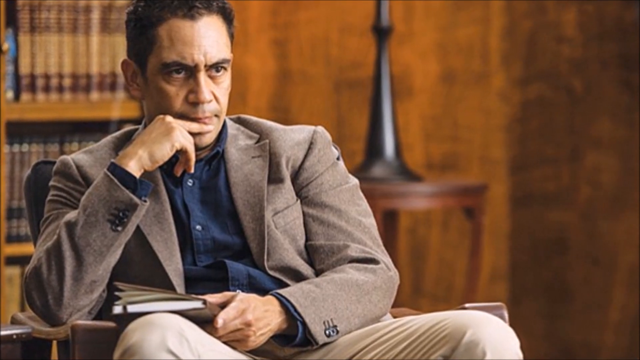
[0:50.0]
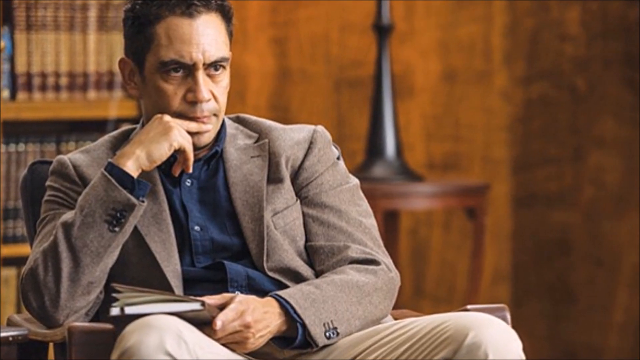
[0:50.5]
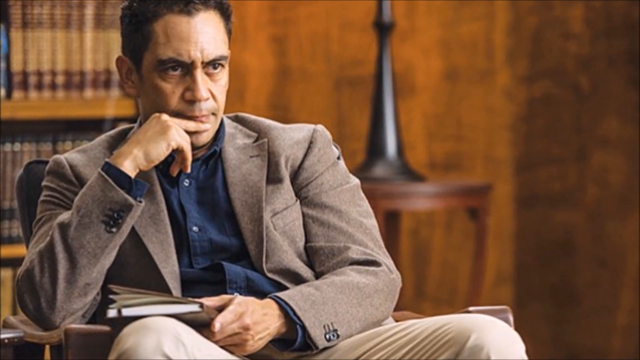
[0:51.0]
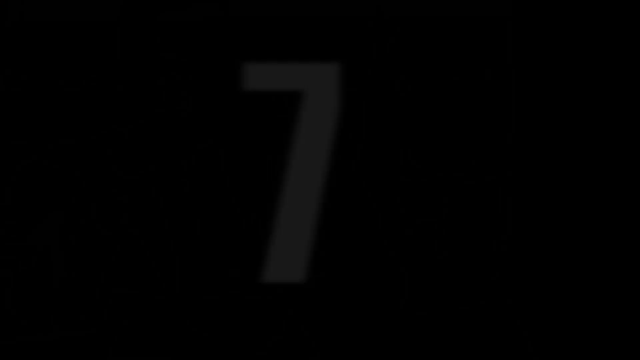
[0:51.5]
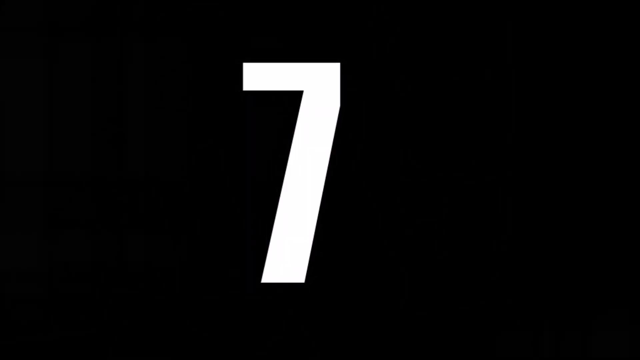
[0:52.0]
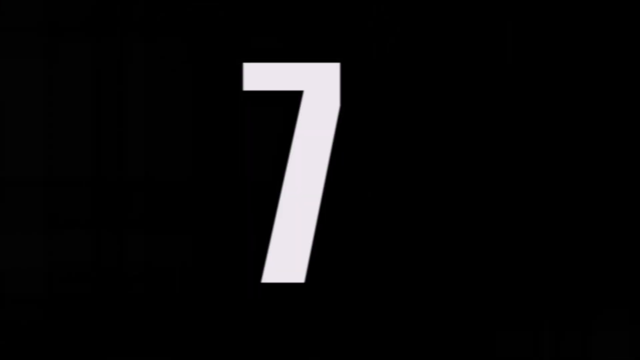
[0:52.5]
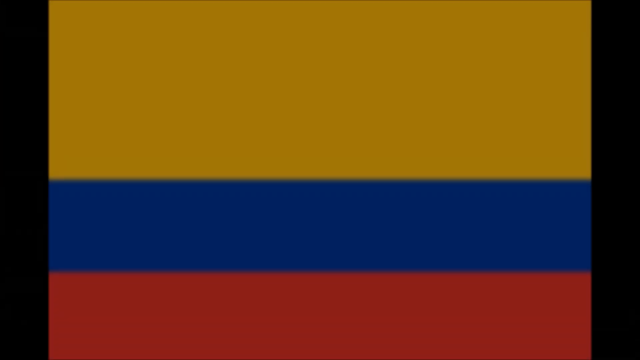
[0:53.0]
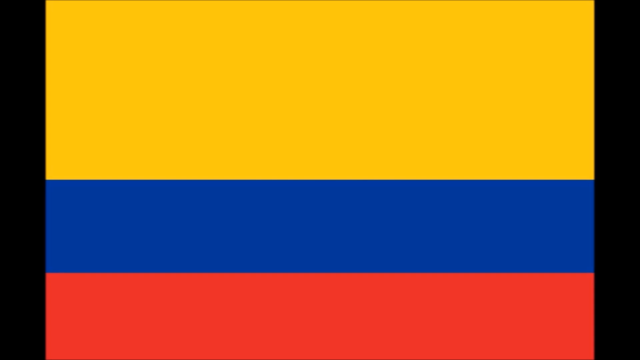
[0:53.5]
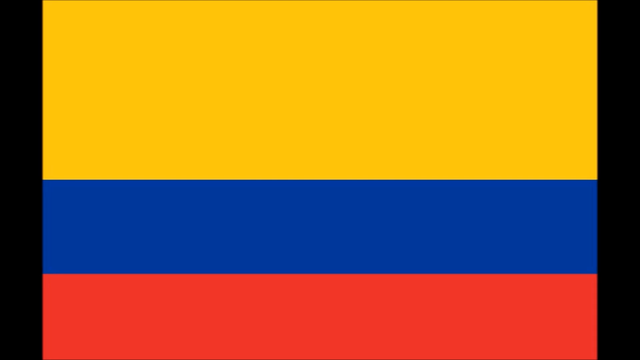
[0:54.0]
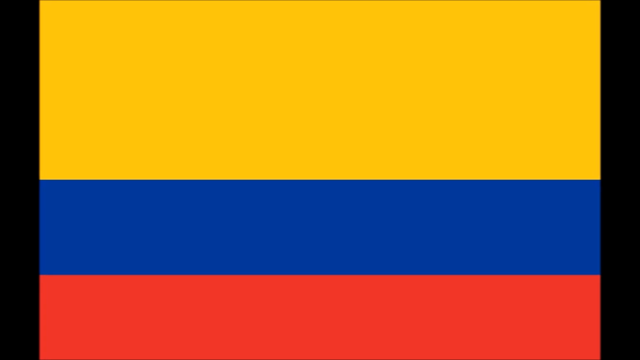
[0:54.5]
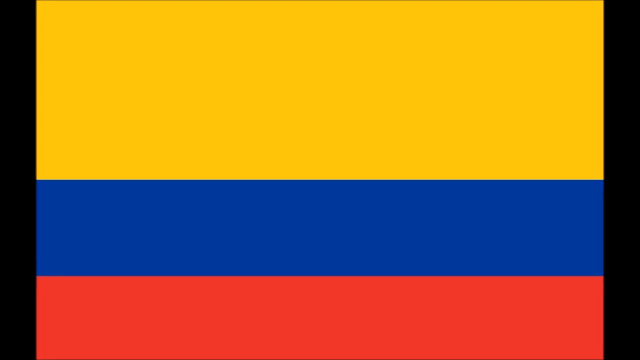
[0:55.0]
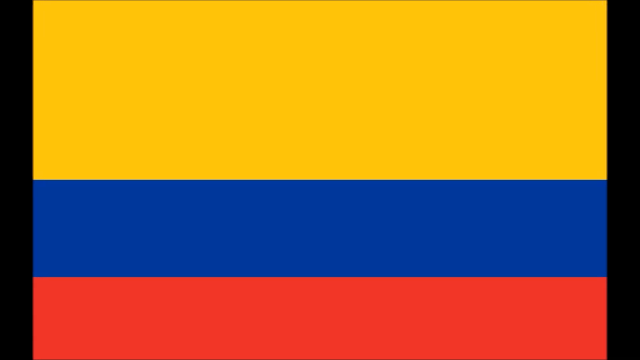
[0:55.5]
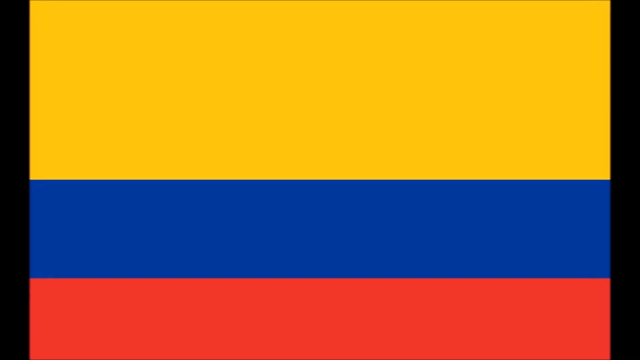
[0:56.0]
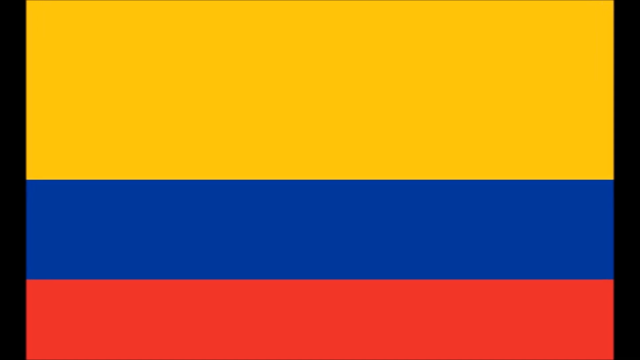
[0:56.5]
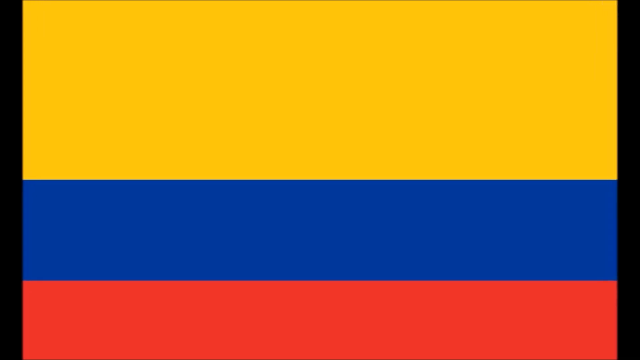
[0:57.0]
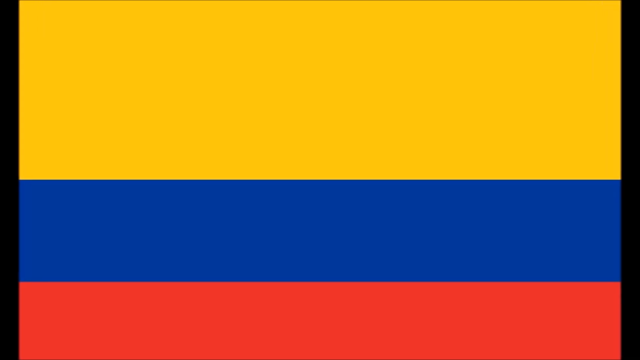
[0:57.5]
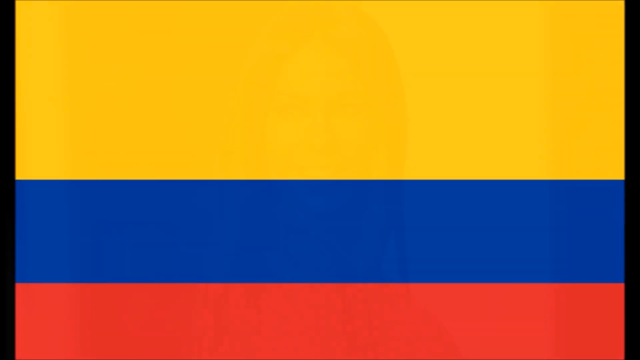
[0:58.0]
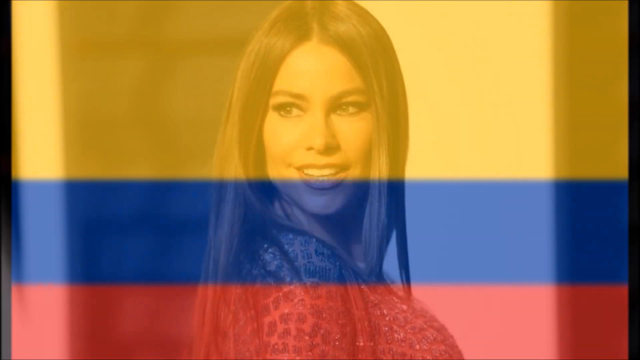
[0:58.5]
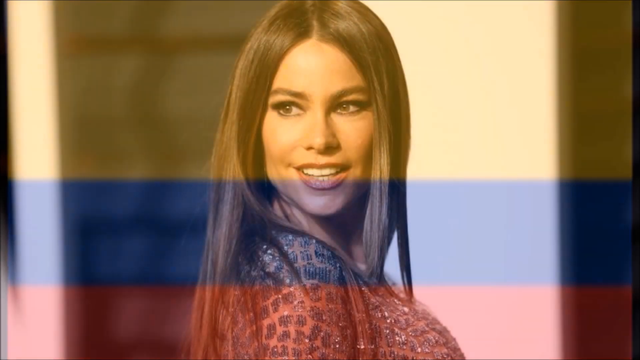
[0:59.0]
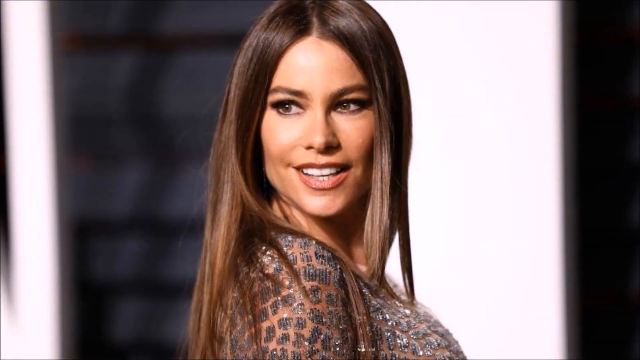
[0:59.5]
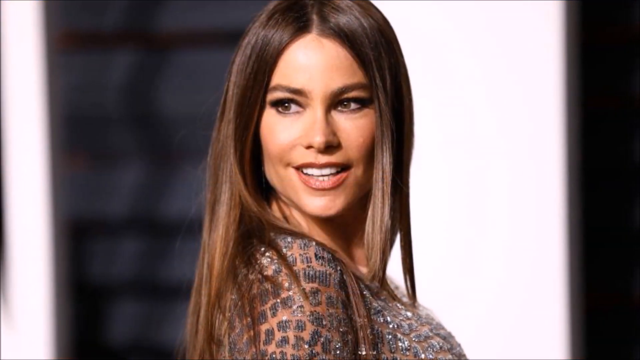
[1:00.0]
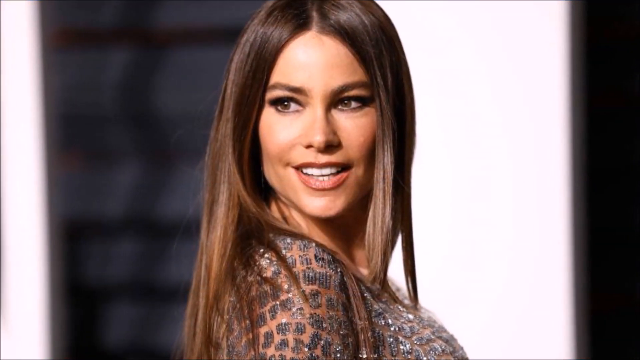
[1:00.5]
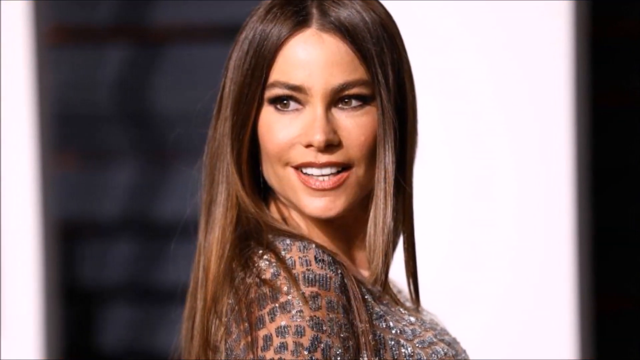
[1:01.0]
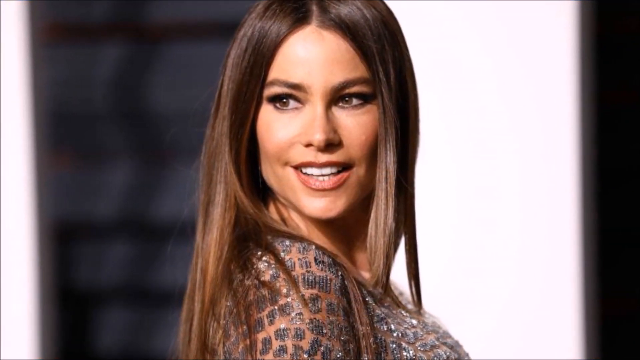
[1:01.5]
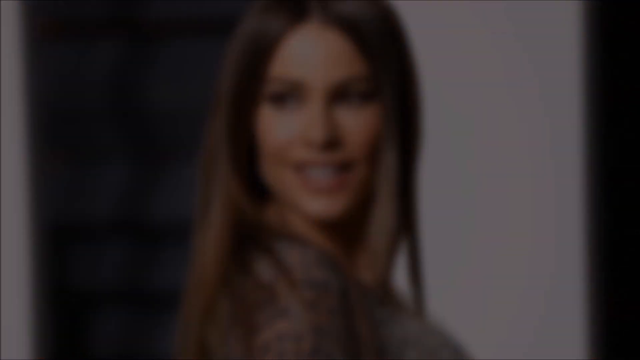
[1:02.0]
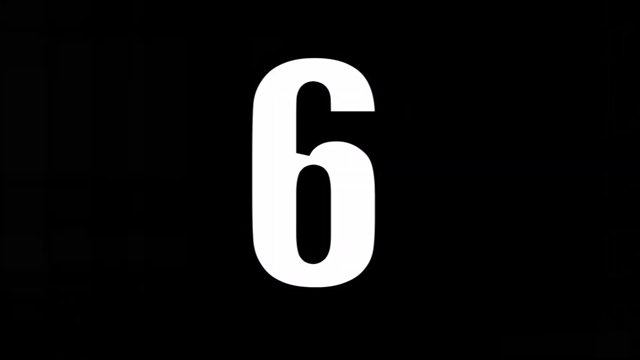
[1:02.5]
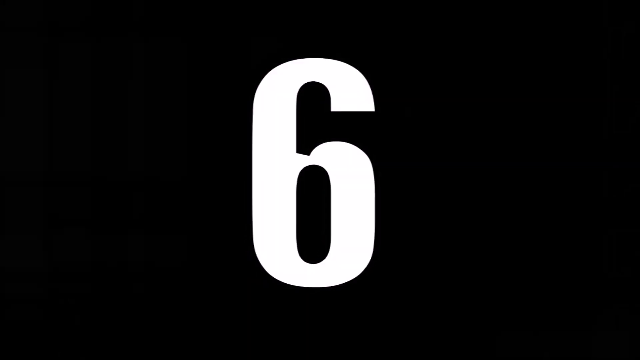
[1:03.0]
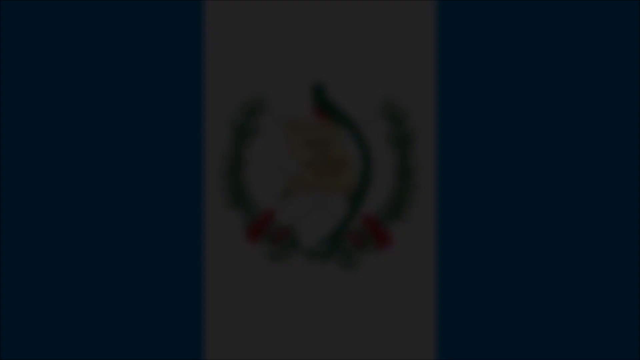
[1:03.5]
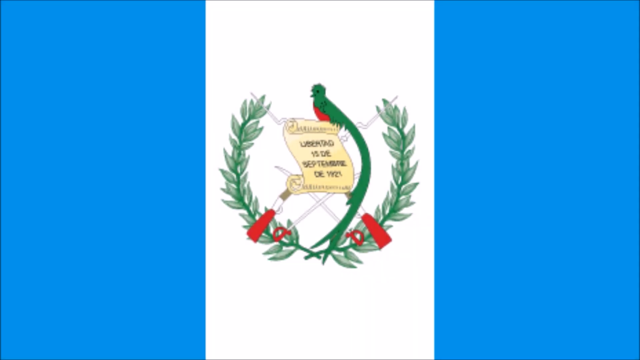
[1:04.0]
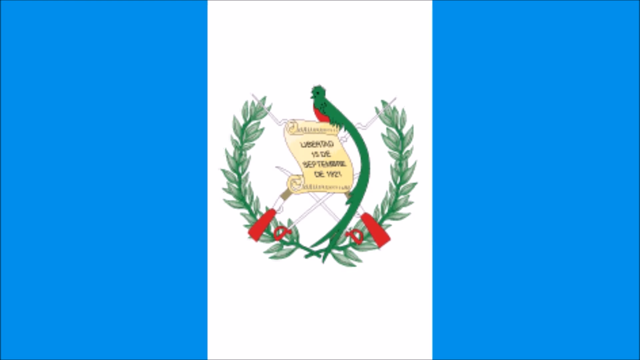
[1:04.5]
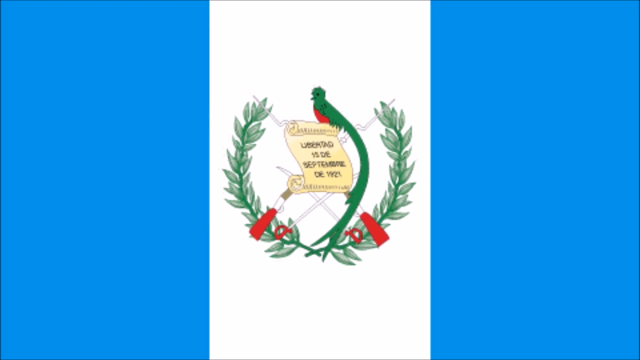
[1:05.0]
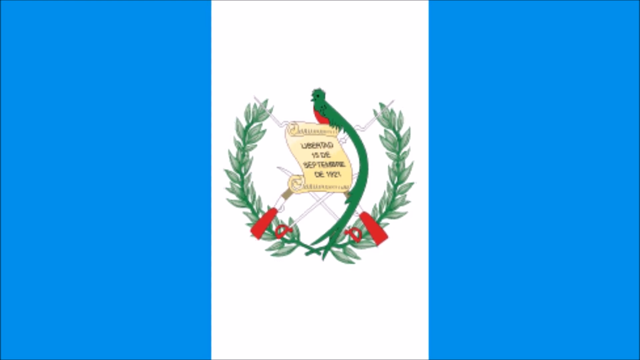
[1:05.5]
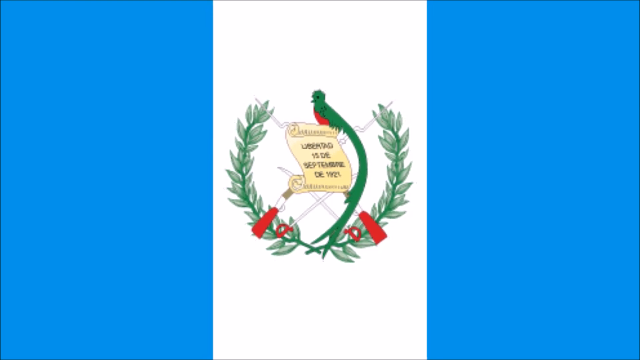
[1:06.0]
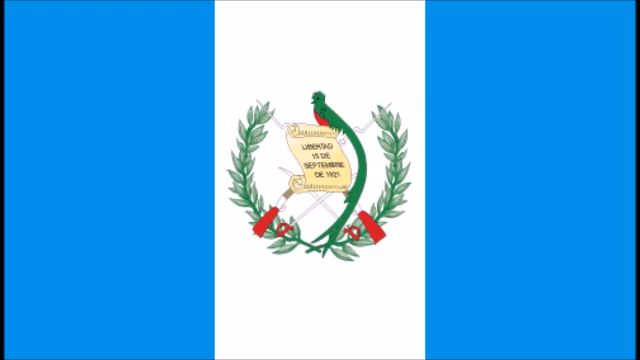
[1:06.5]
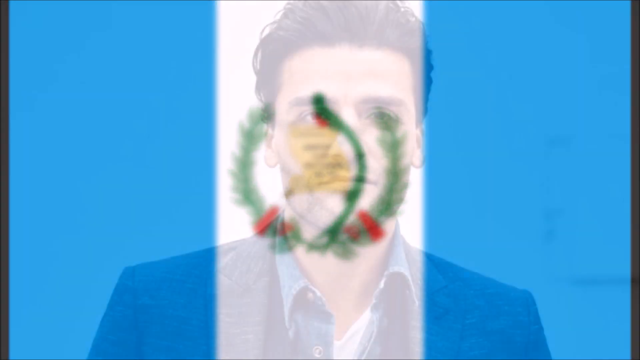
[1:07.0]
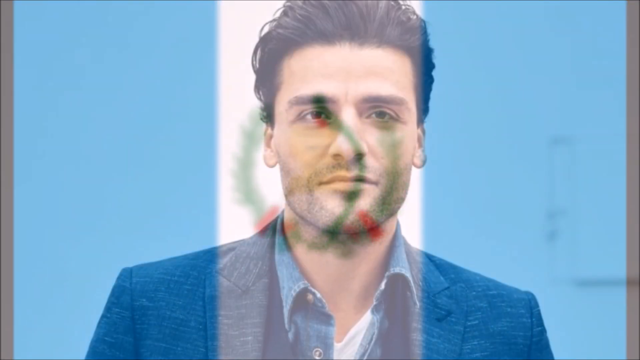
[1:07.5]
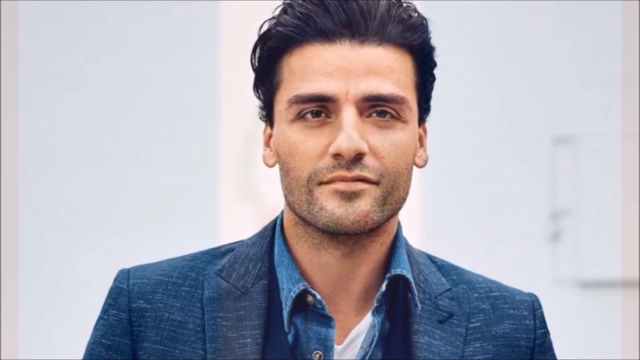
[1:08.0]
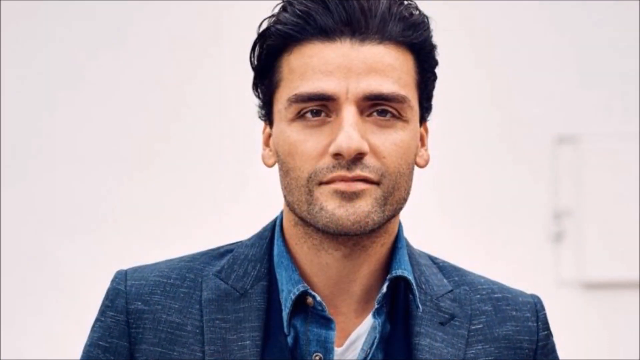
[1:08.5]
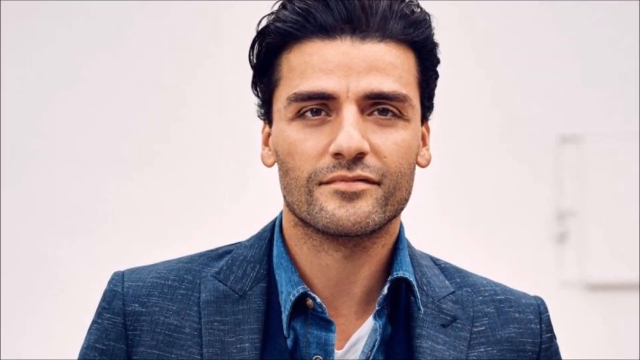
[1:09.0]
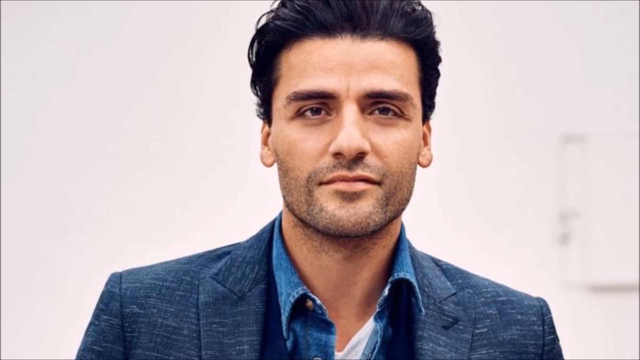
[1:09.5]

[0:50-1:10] In a photograph, the actor Javier Bardem sits in a chair wearing a tweed beige suit over a dark blue shirt. His right hand is up on his face under his chin, and with his left hand he holds a journal or a book on his lap. Behind him are wood paneling and a wooden bookcase. The number seven then appears against a black backdrop, followed by a national flag of three wide horizontal bars: yellow, then blue, then red. A photograph of Sofia Vergara follows; she has long straight brown hair and looks over her right shoulder, smiling at someone, wearing a dress that looks as though it has beadwork over a net background, with only her shoulder visible. The number six appears against a black background, followed by another national flag with vertical blue bars on either side and a white bar in the center. Its central emblem looks like two laurel branches curved around a bird sitting on top of an open scroll; the bird is green and red, with a long green feather curving around under the scroll. Next is a photograph of a man with dark hair and a very thin beard and mustache, wearing a blue jacket over what looks like a denim shirt and looking straight ahead.